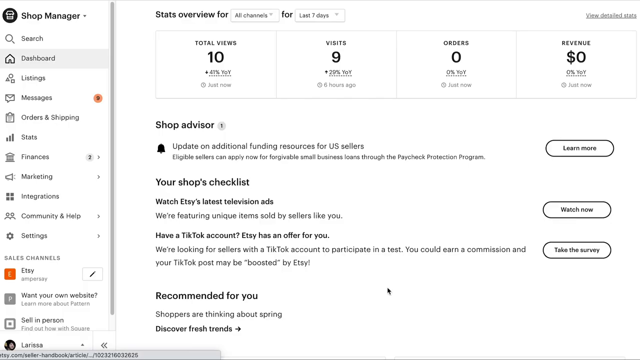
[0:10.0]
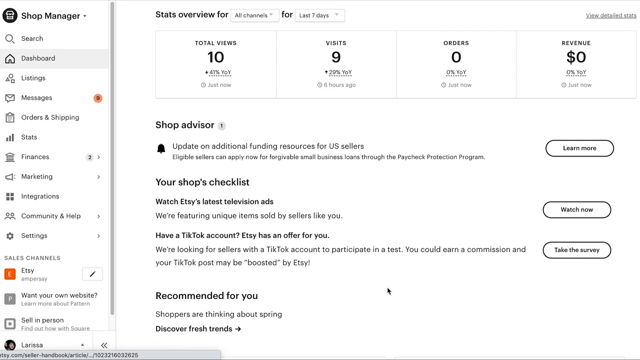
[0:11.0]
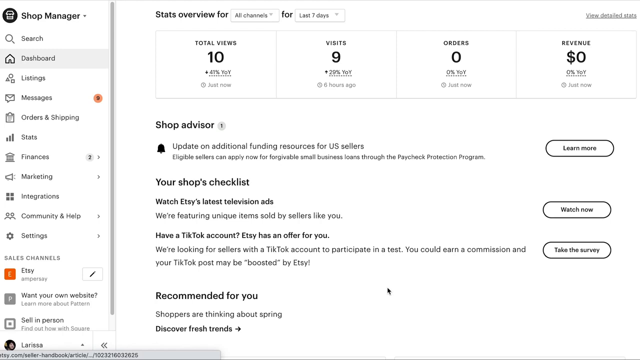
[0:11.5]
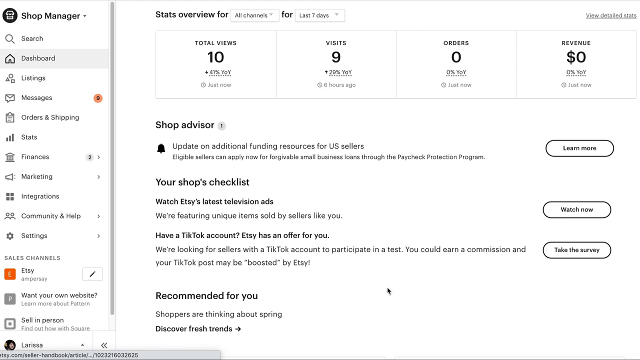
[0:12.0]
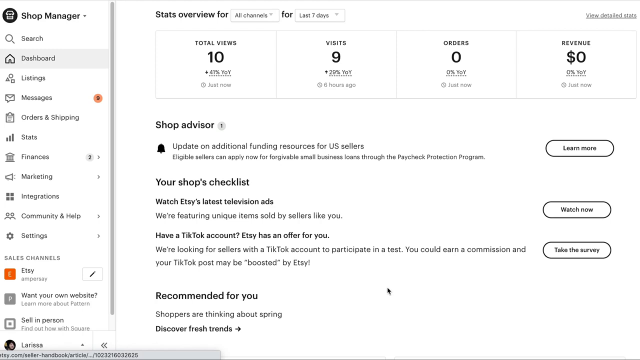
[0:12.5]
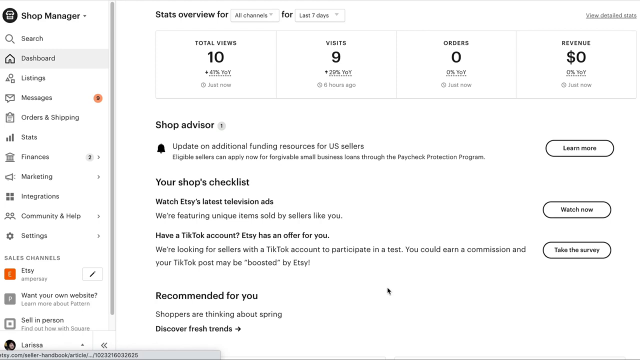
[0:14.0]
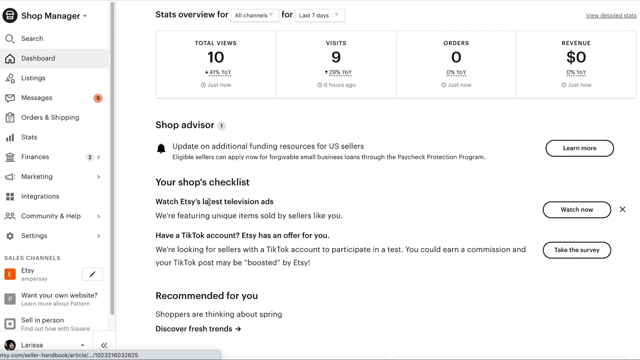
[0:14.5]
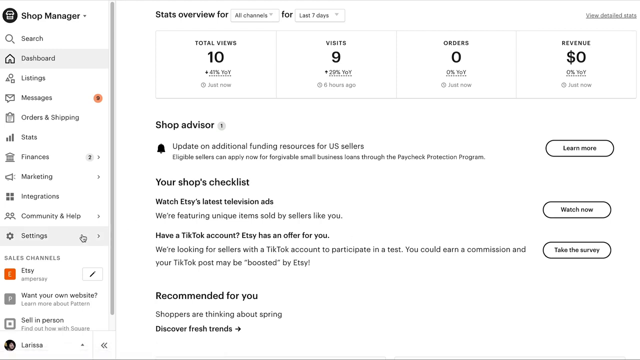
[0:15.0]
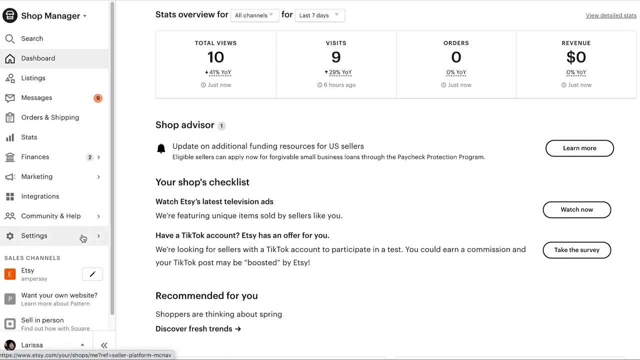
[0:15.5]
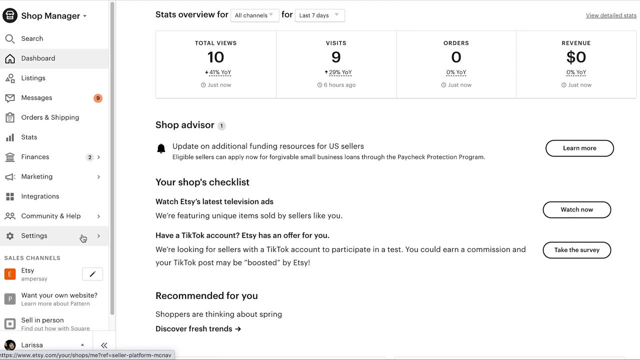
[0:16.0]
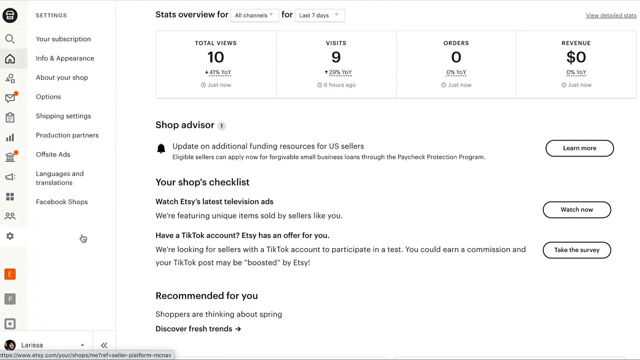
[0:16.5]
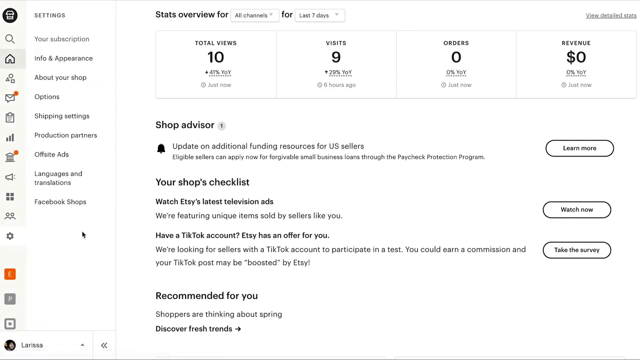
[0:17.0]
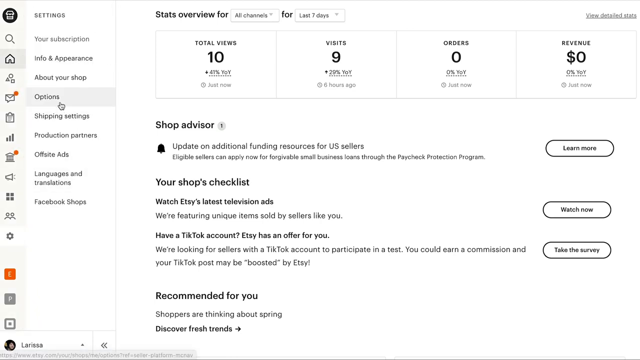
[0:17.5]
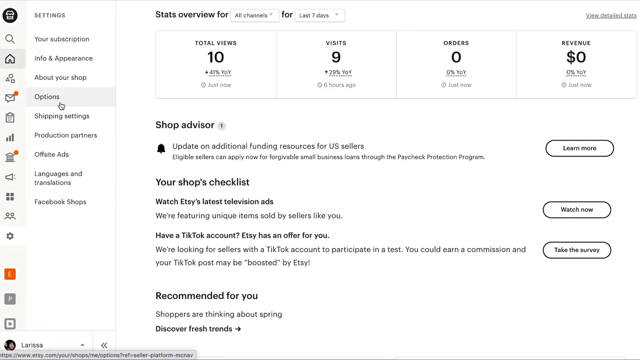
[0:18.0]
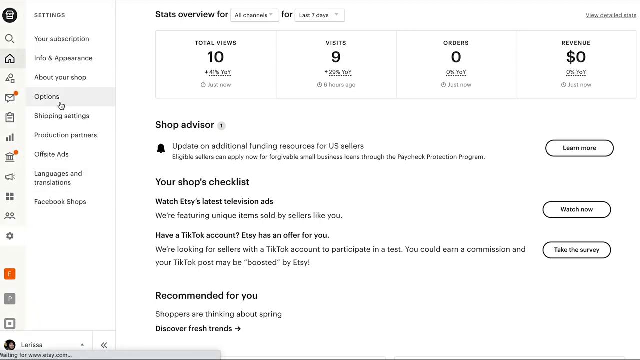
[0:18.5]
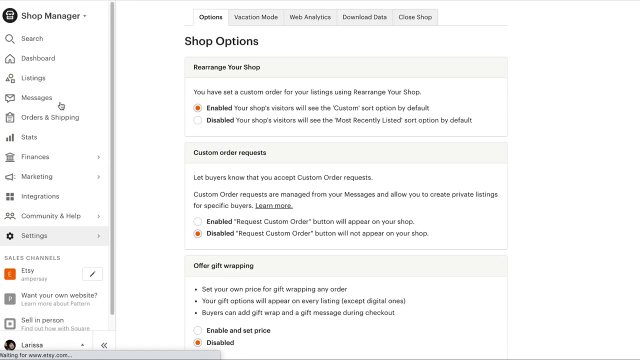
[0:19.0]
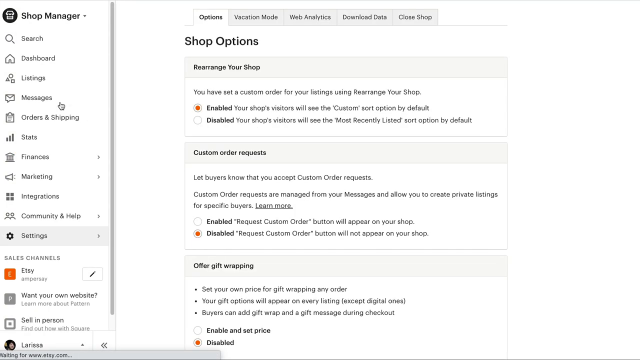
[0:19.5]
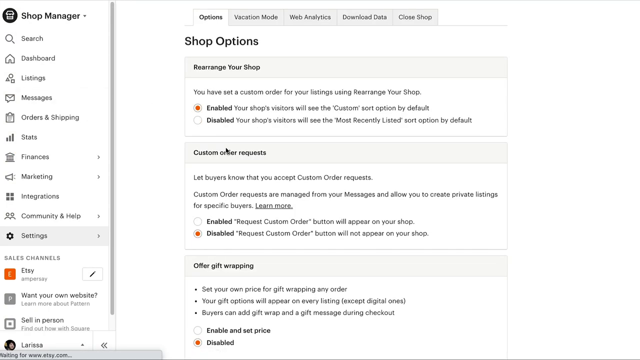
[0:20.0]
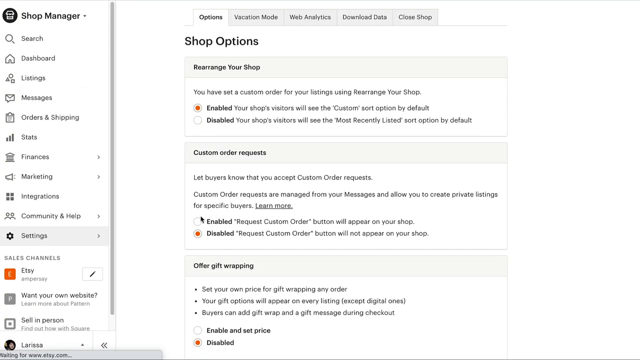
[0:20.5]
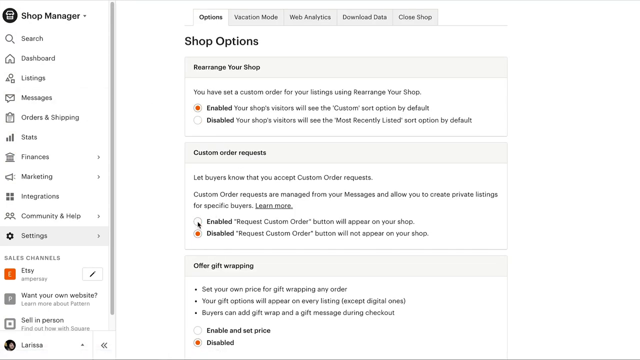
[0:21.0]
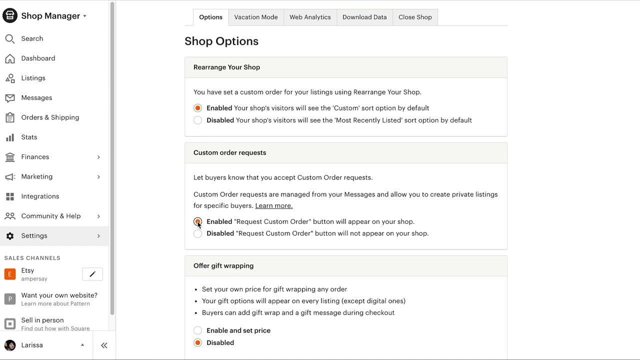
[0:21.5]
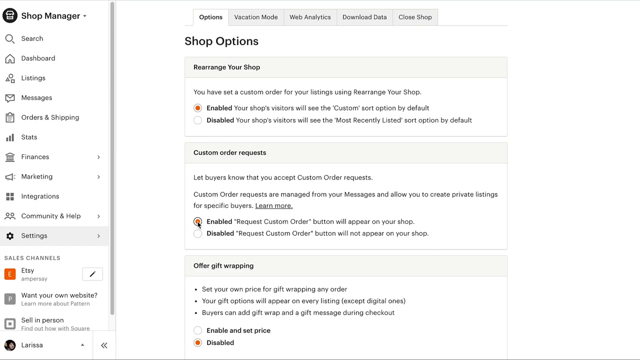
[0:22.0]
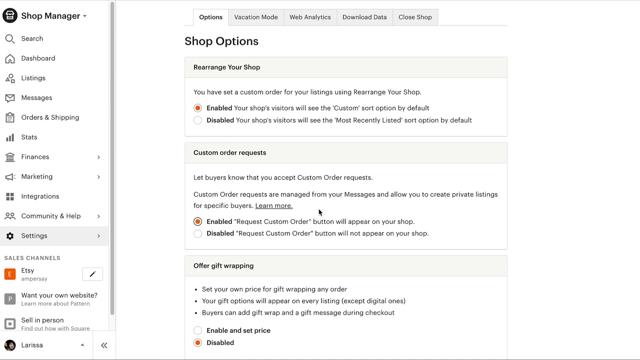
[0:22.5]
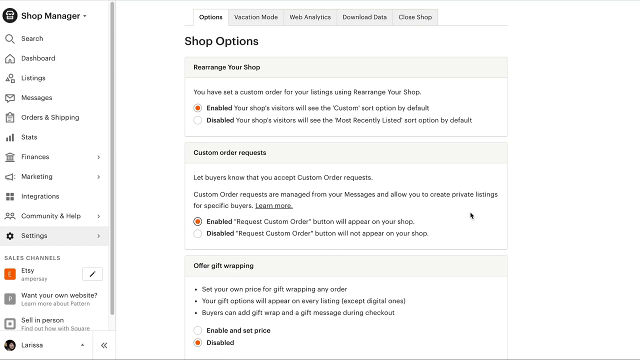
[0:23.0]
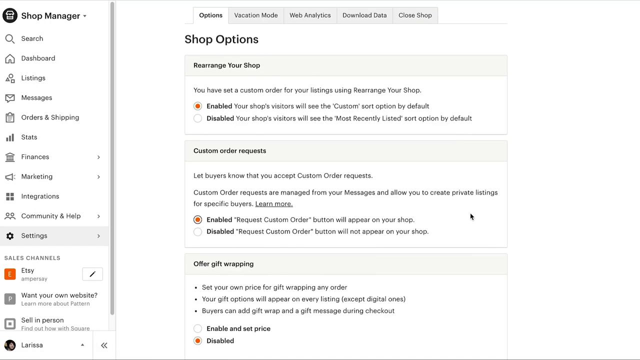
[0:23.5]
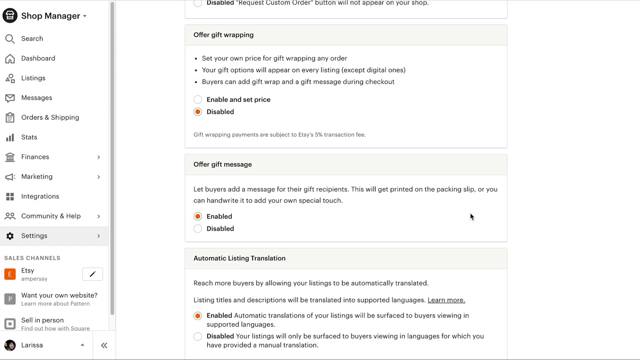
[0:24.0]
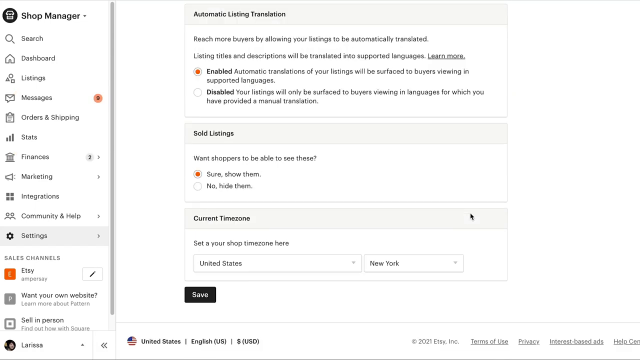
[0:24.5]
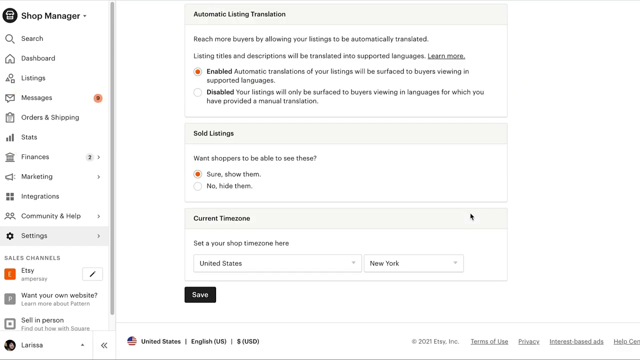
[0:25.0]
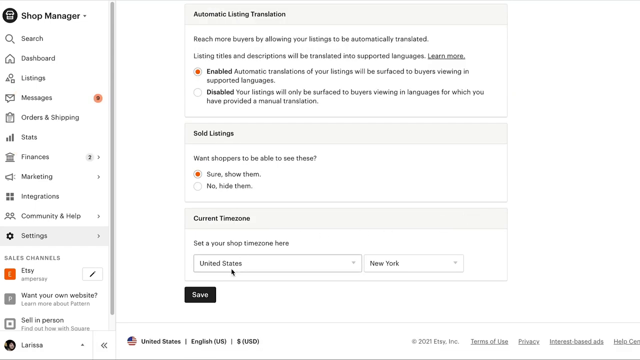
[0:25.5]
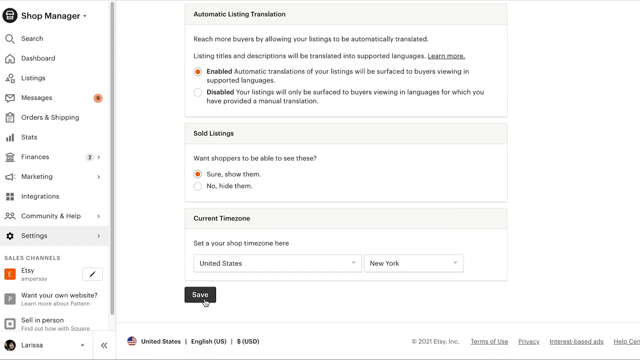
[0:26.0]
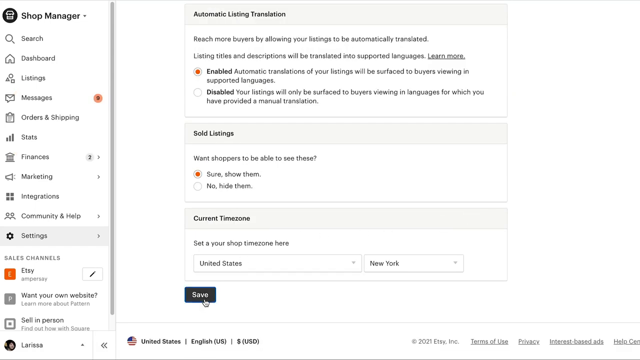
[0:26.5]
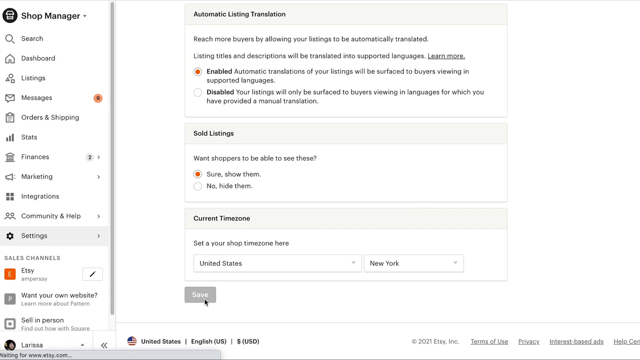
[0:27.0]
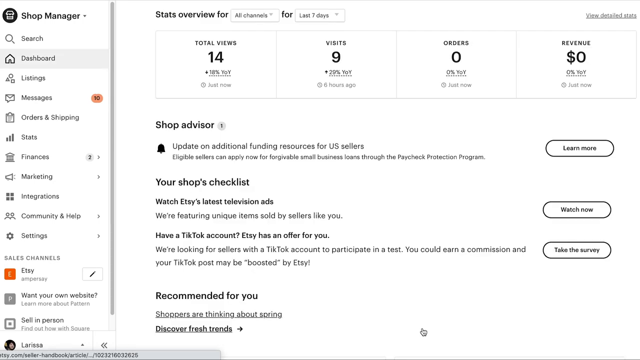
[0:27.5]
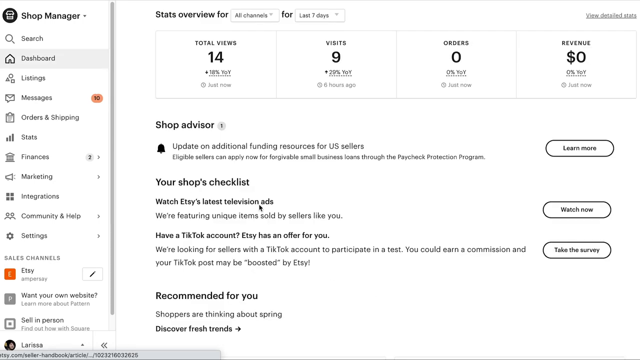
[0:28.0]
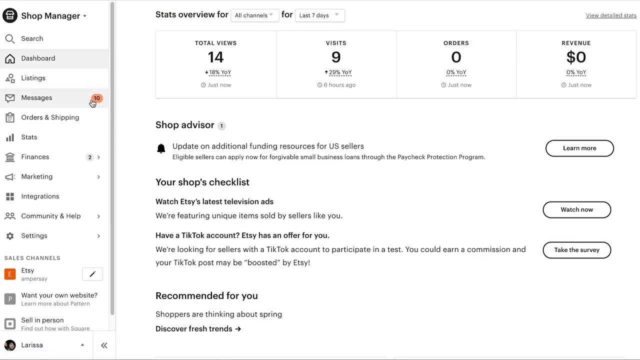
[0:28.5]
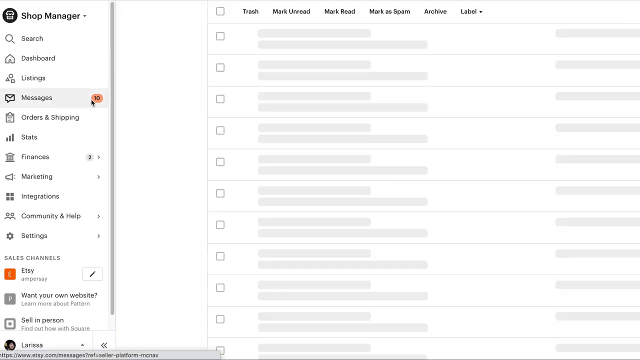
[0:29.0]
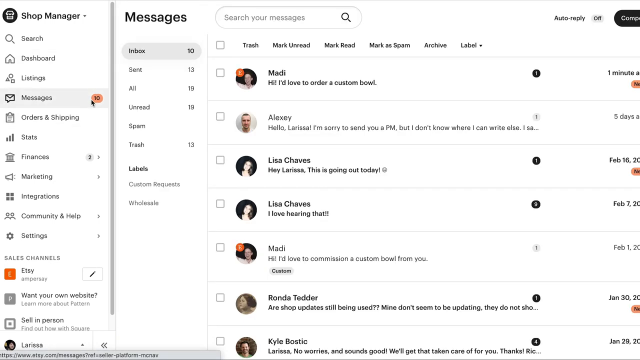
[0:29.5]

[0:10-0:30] The page for creating custom listings shows 10 views, nine visits and the orders. The video then goes to the message options, then to options, then to shop options, where everything is enabled. Next, custom order request is enabled, the page is scrolled down and the settings are saved. After that, messages is clicked again and the messages are opened.